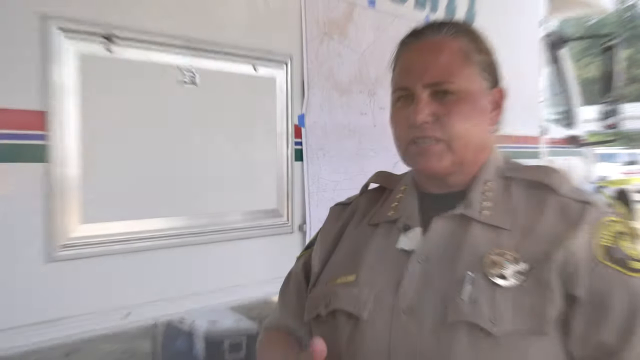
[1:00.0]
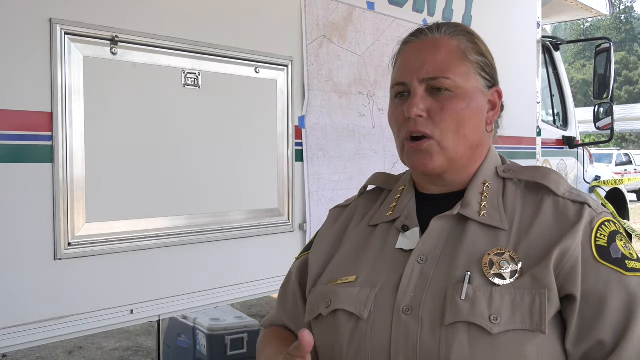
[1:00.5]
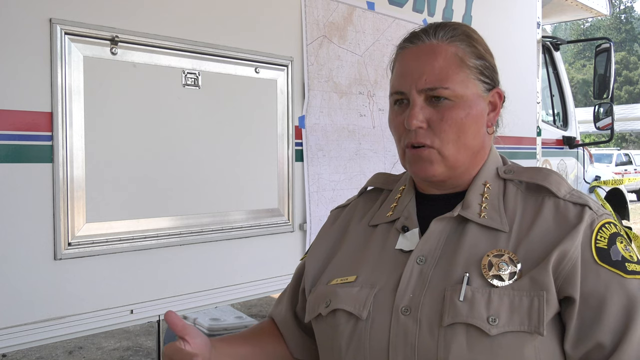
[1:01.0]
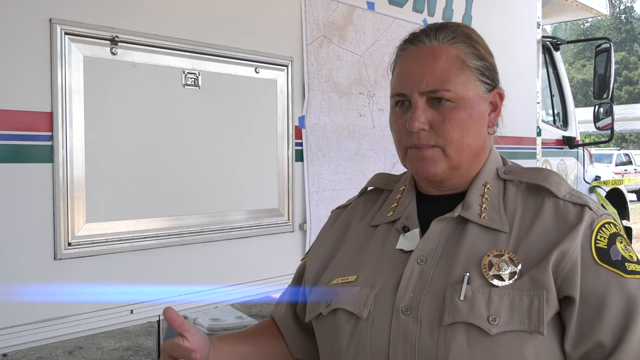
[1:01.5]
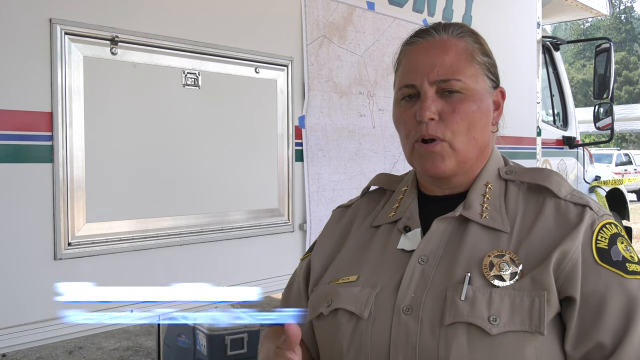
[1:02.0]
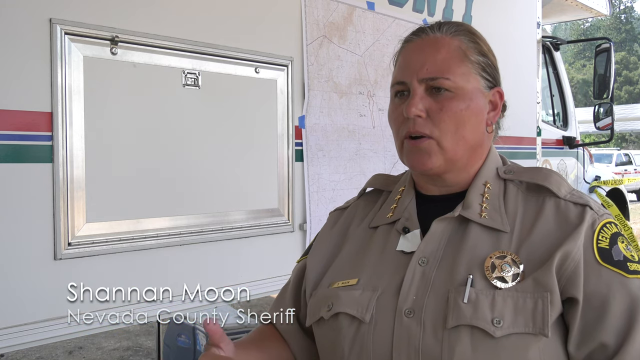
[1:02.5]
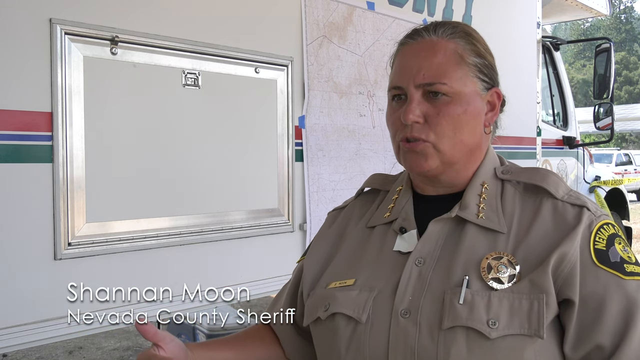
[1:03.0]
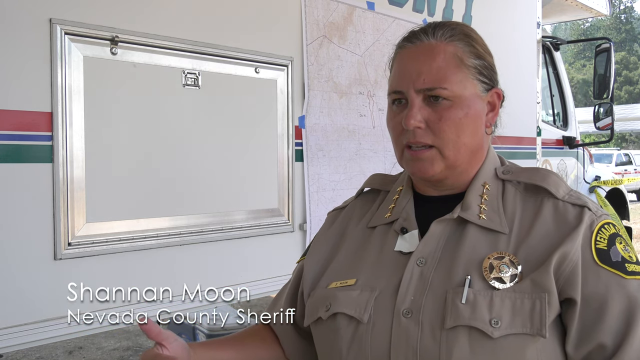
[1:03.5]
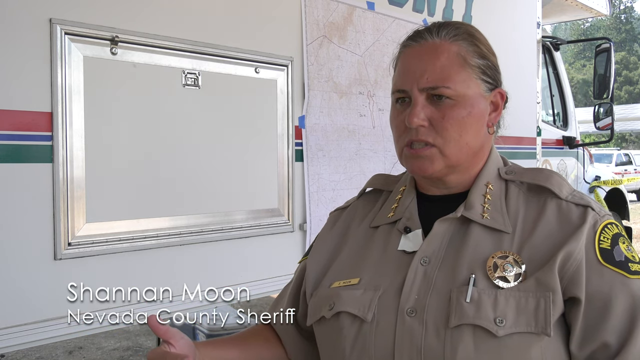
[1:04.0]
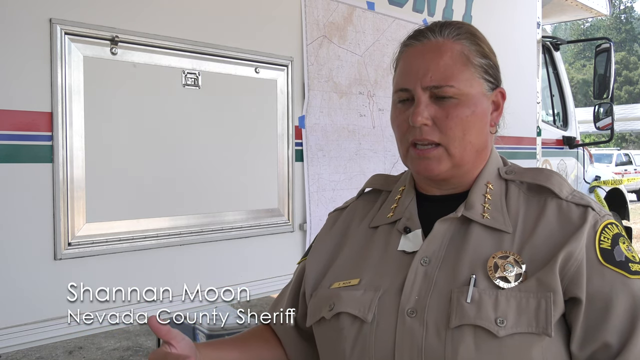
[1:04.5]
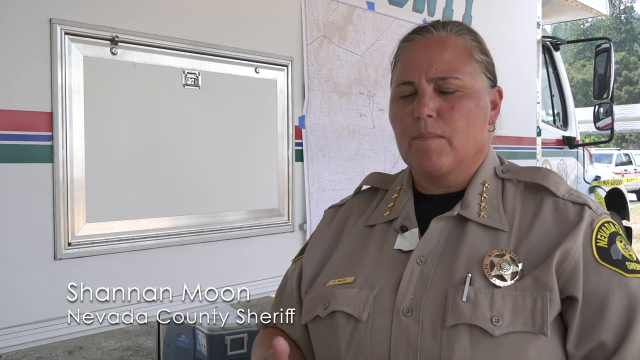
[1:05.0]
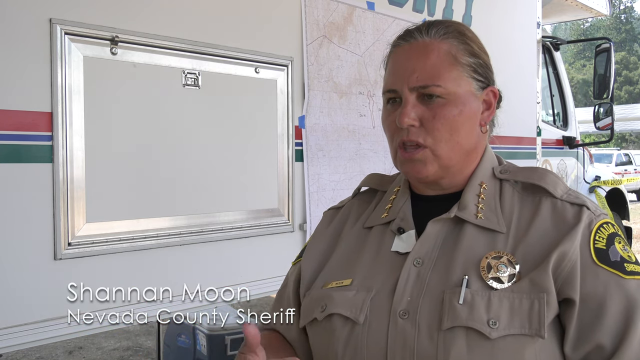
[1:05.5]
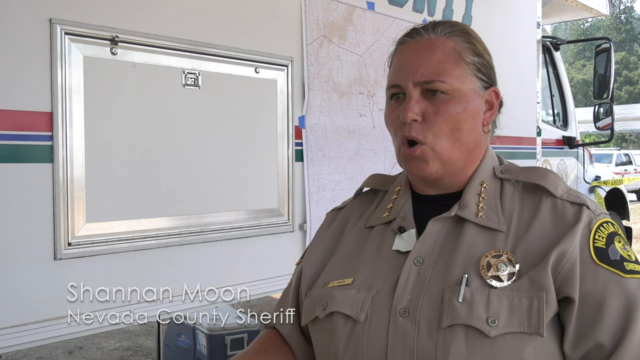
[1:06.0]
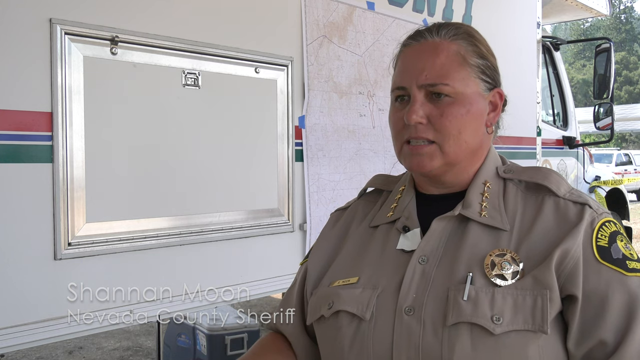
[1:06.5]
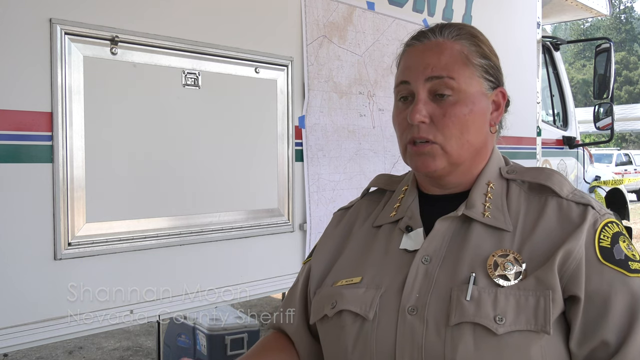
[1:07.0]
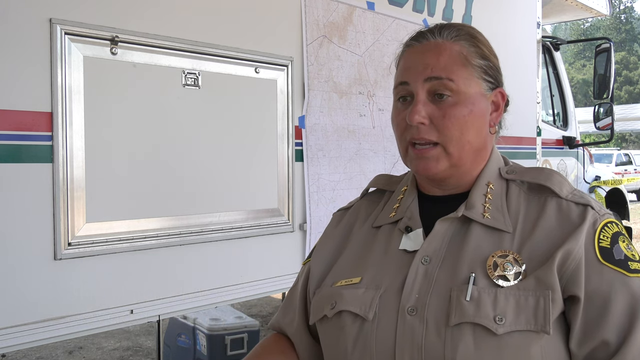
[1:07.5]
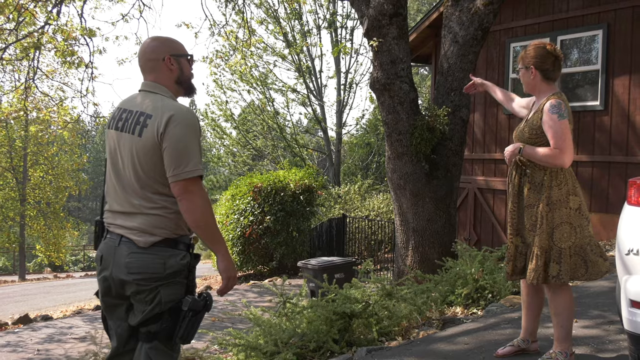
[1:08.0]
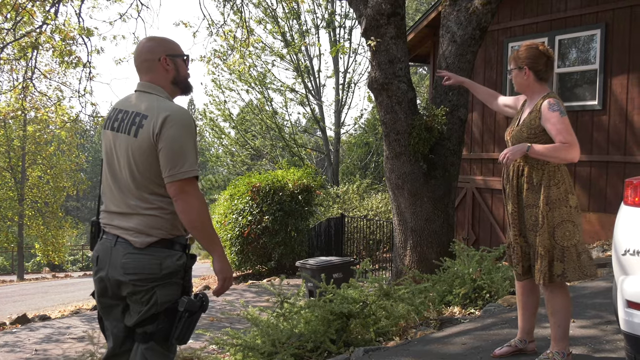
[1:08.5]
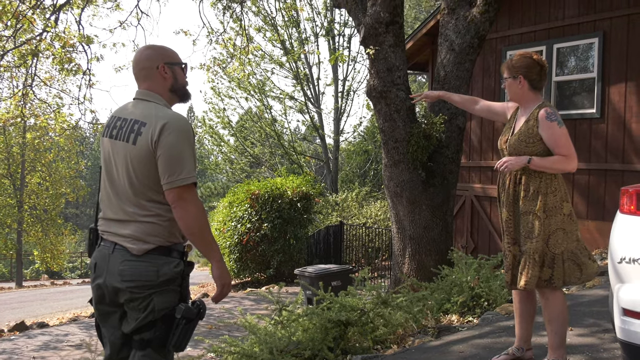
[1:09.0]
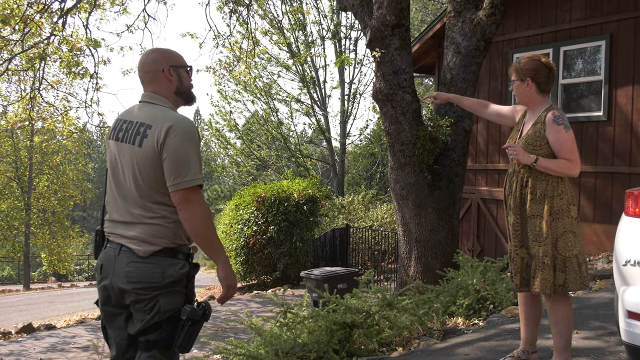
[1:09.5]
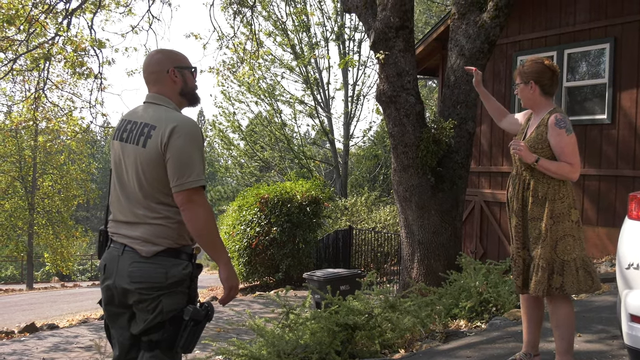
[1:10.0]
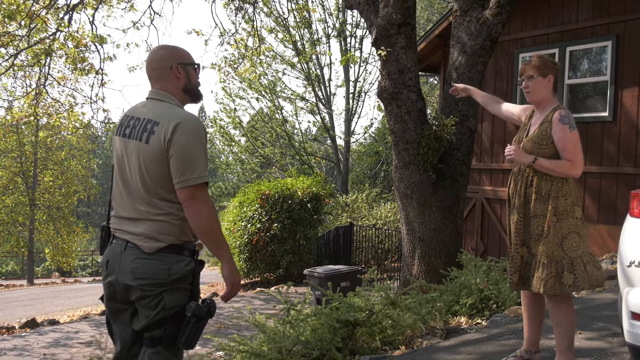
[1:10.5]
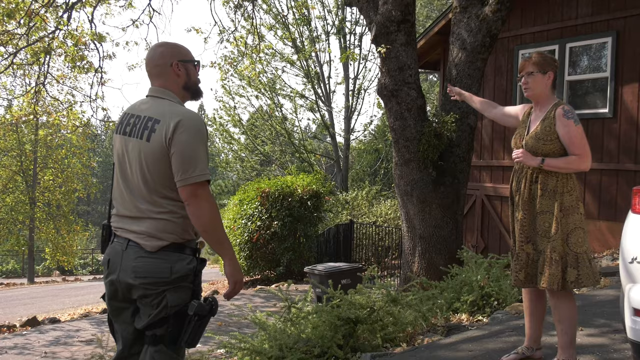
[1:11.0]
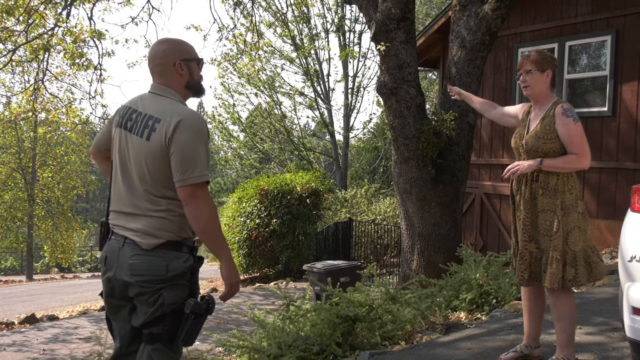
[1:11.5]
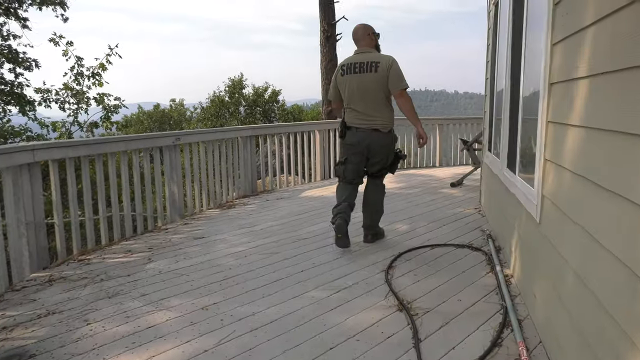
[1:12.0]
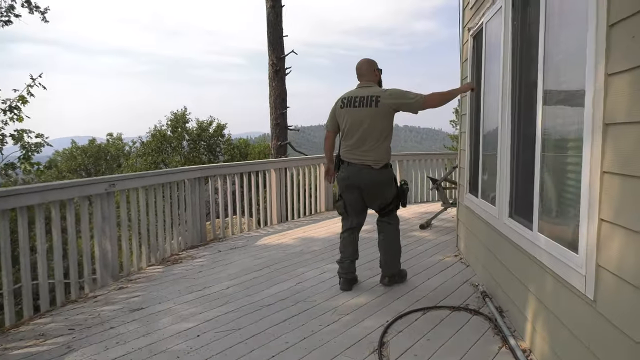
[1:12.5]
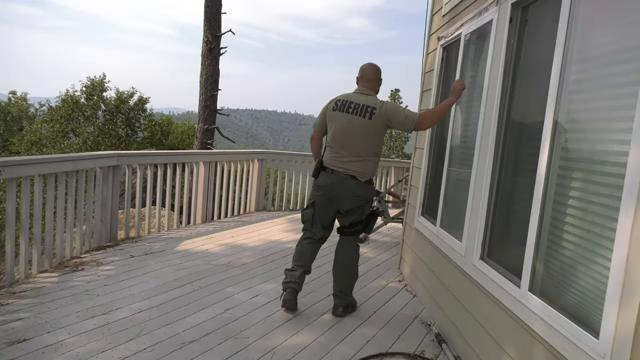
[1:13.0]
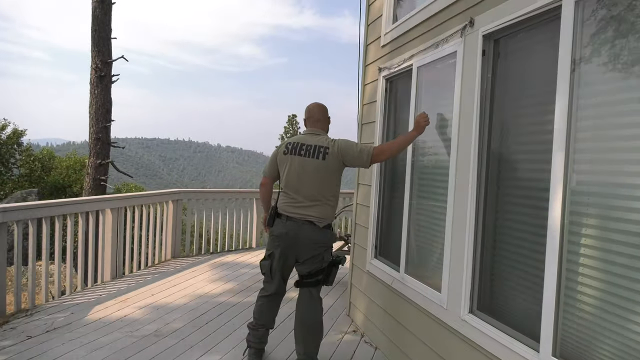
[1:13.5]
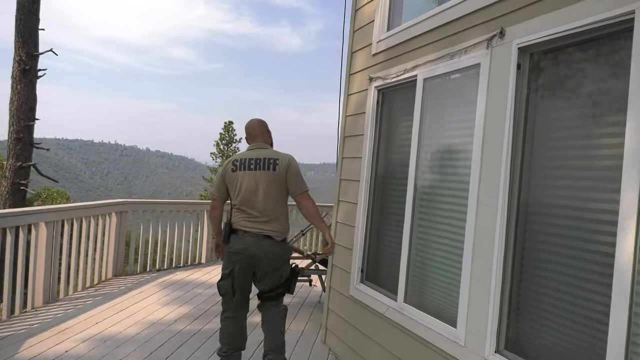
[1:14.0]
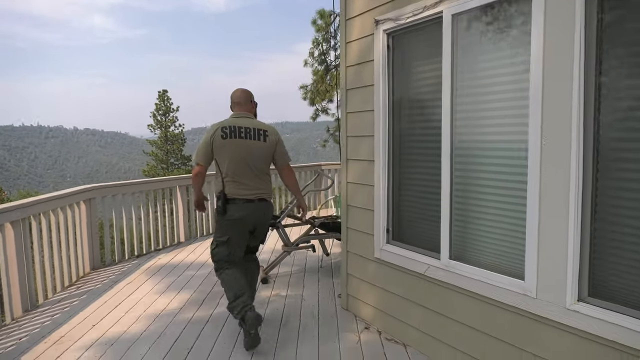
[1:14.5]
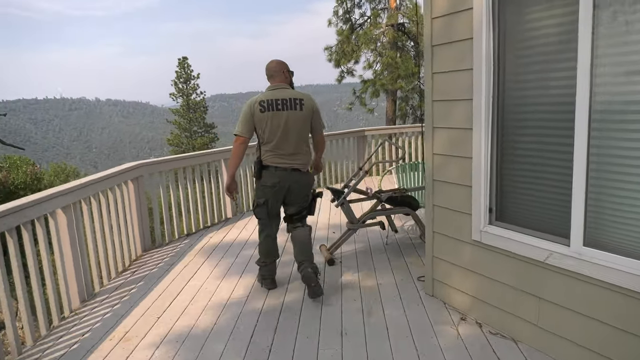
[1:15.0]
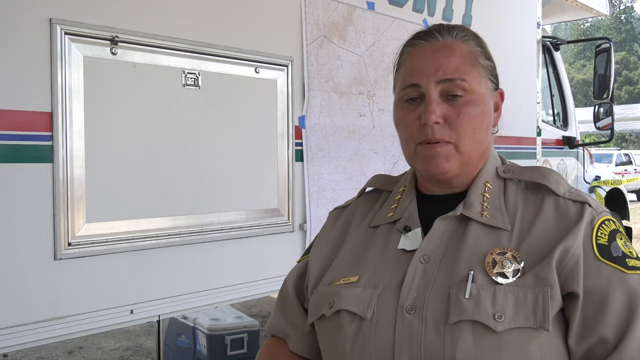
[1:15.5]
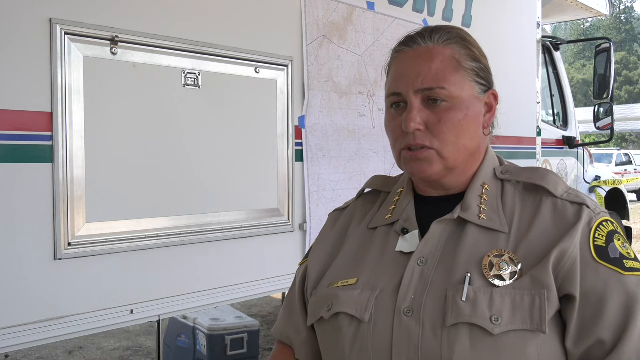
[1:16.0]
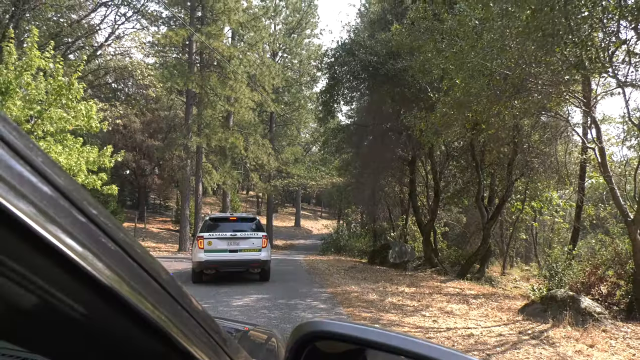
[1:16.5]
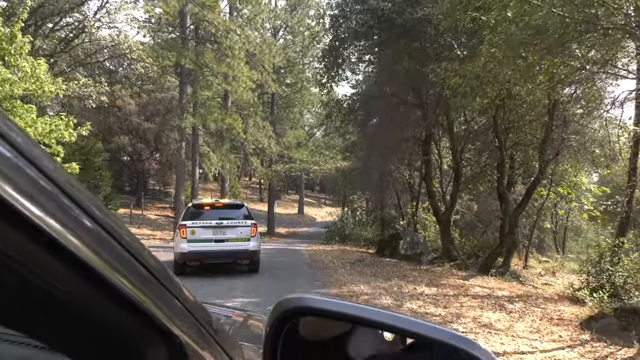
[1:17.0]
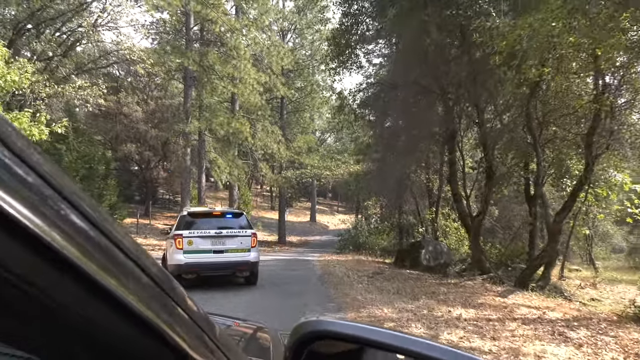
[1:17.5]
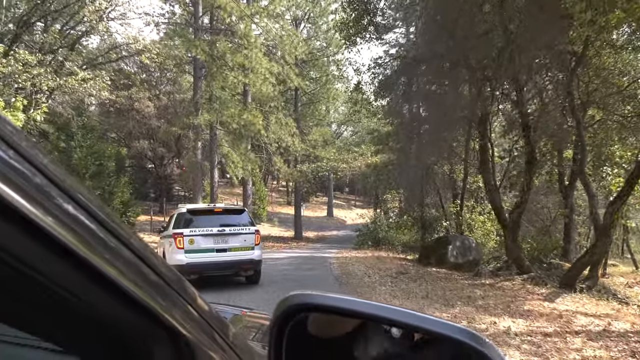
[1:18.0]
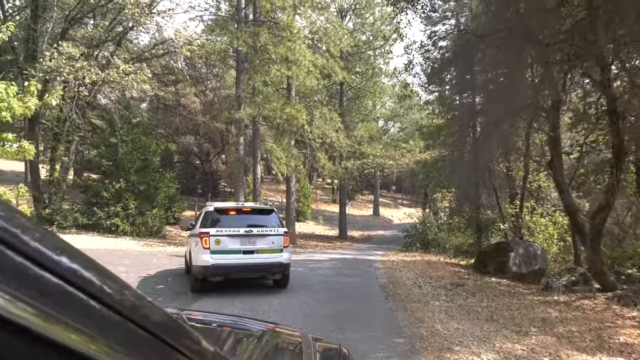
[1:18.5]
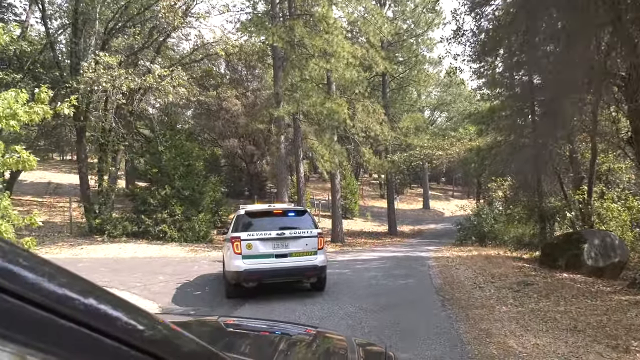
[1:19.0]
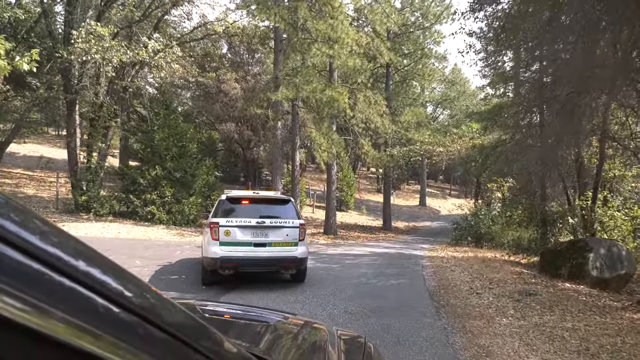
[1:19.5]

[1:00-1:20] A sheriff goes to a house and knocks on the windows.